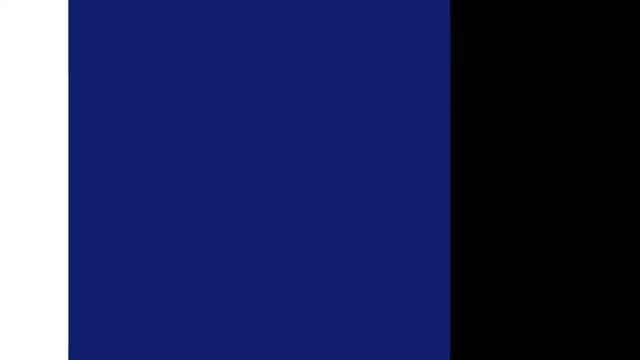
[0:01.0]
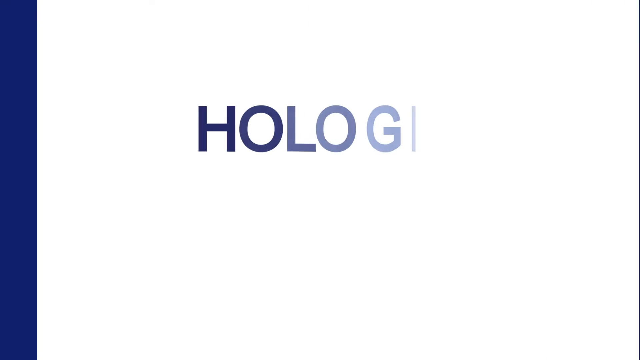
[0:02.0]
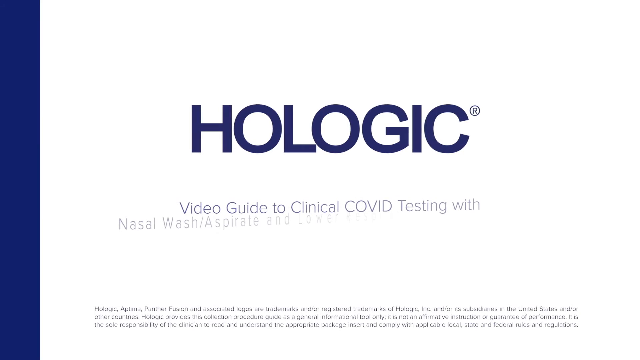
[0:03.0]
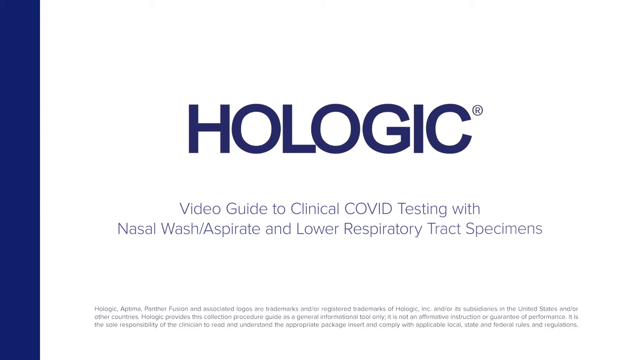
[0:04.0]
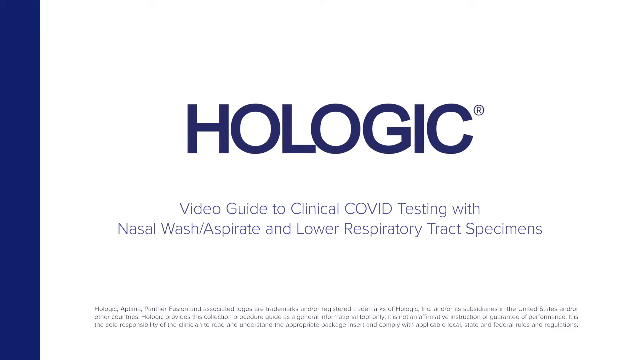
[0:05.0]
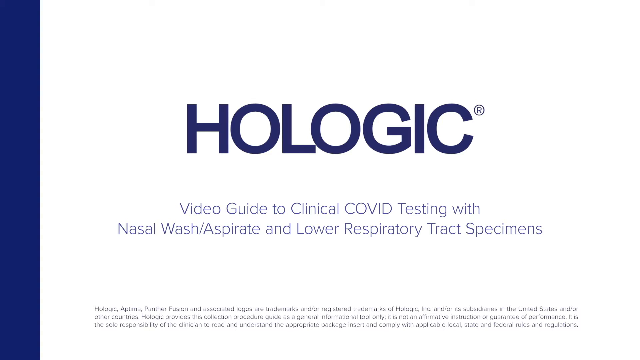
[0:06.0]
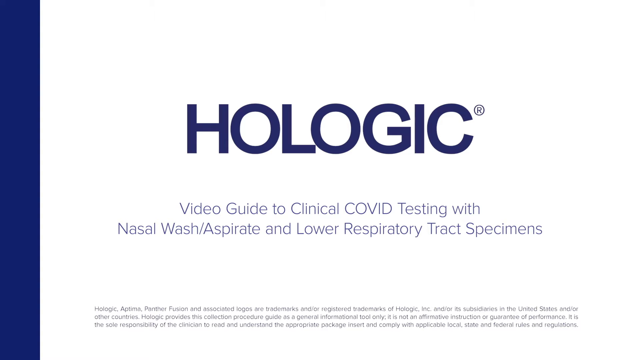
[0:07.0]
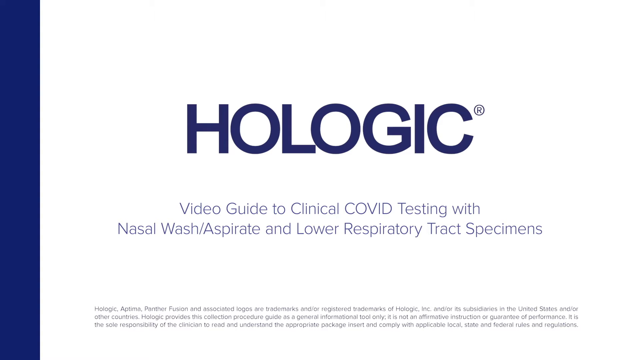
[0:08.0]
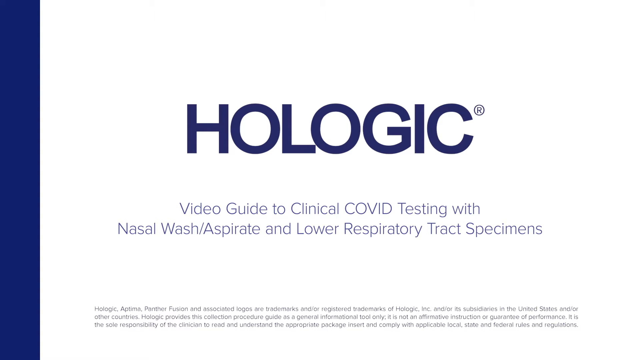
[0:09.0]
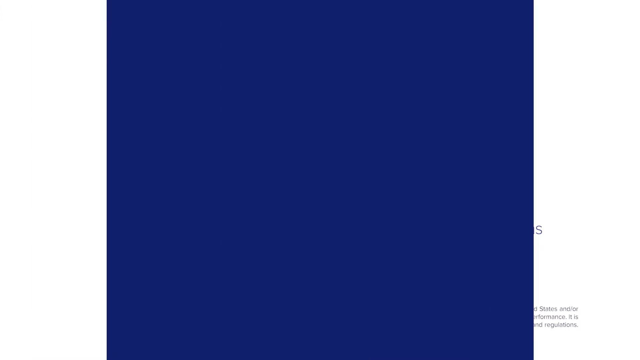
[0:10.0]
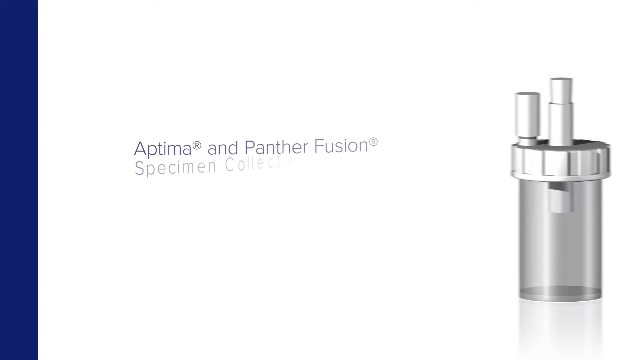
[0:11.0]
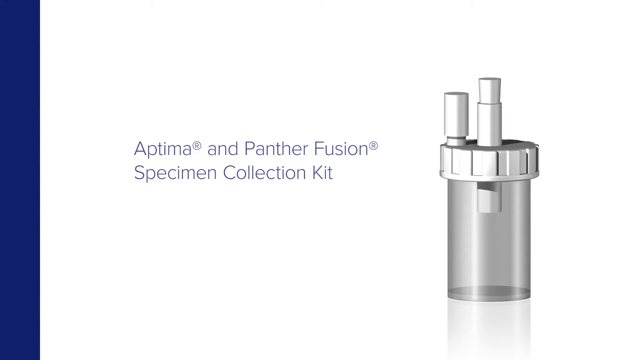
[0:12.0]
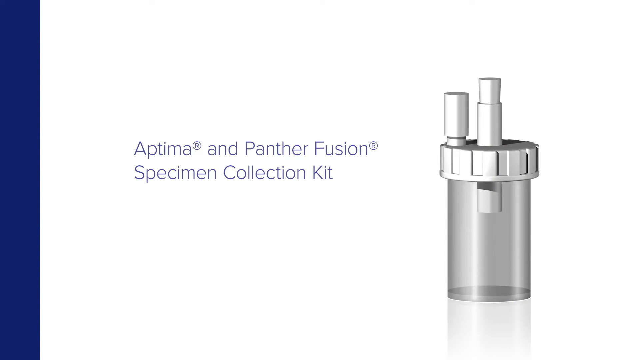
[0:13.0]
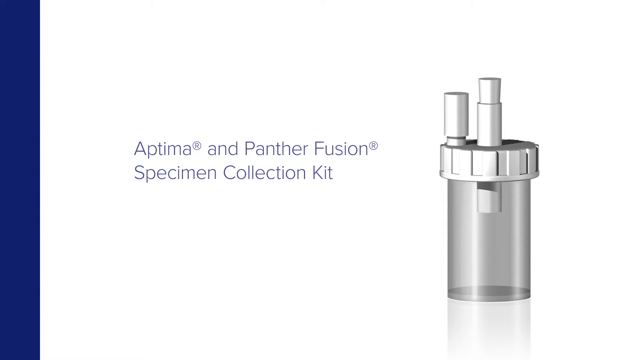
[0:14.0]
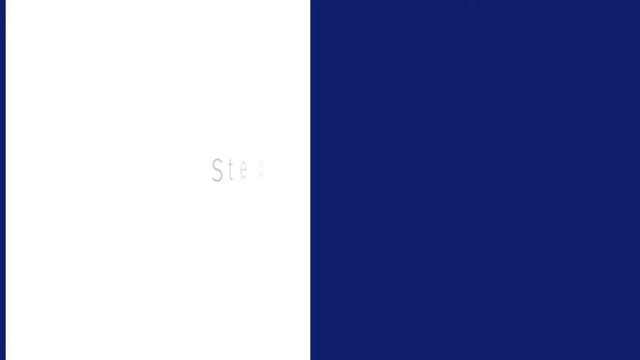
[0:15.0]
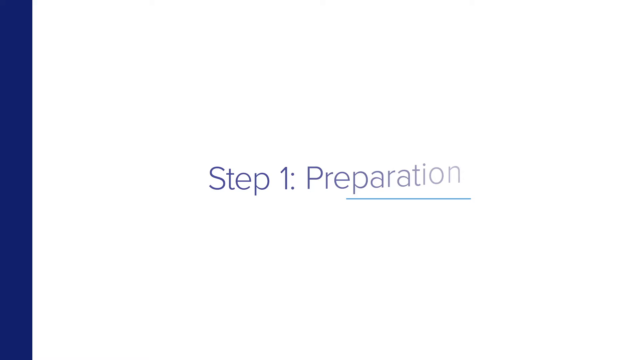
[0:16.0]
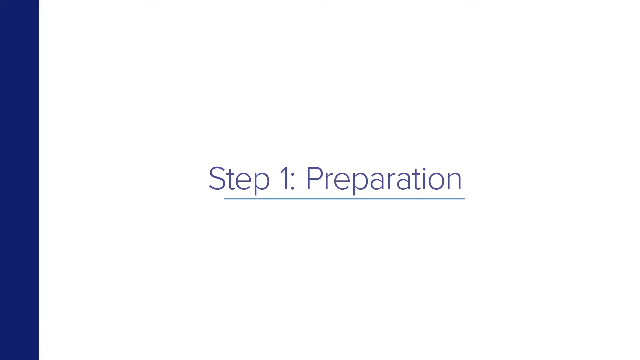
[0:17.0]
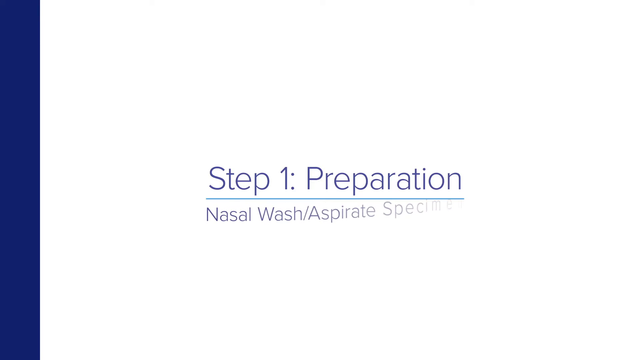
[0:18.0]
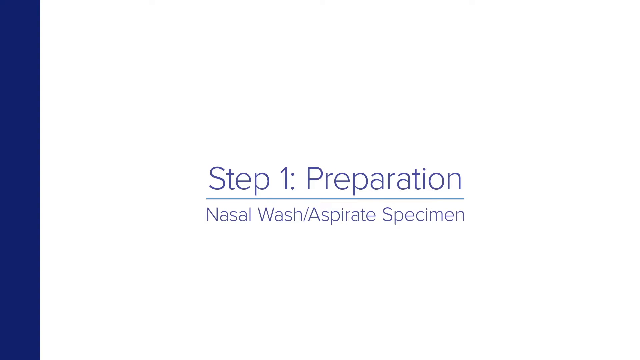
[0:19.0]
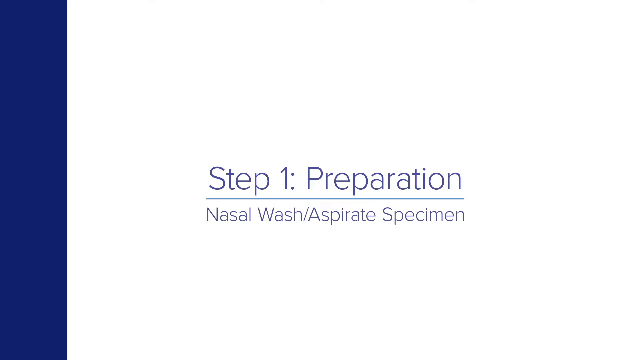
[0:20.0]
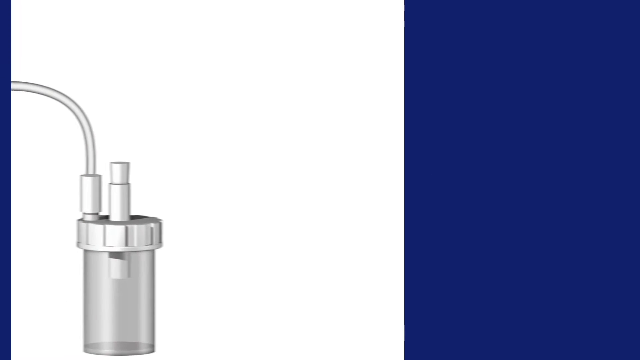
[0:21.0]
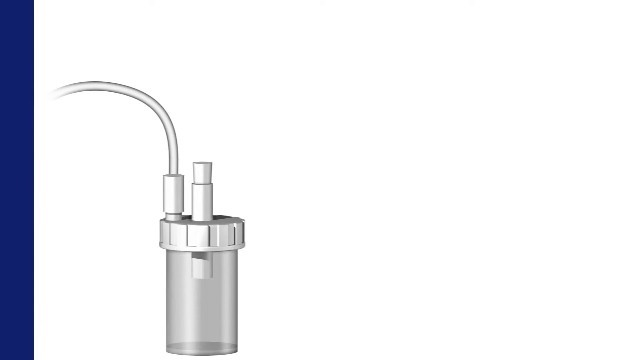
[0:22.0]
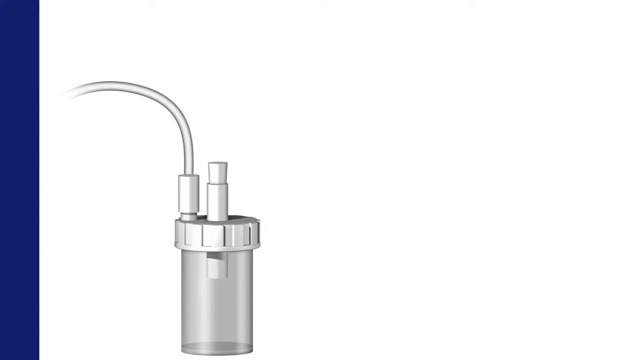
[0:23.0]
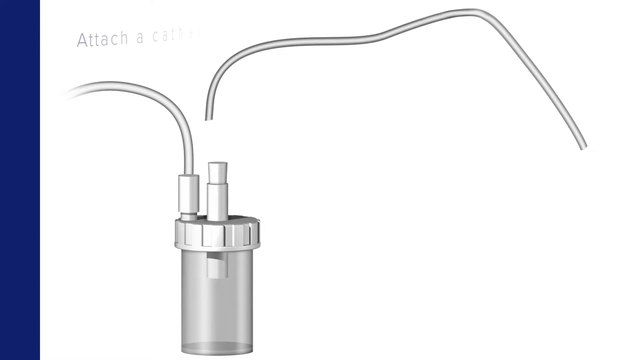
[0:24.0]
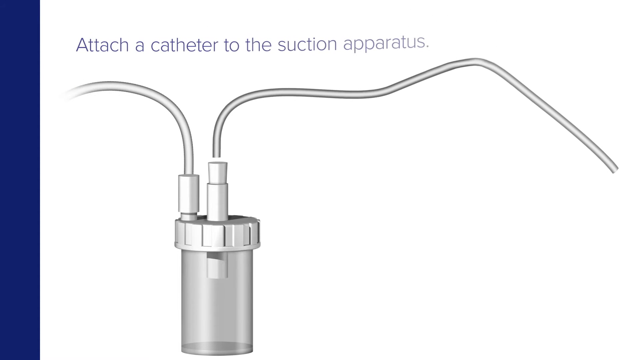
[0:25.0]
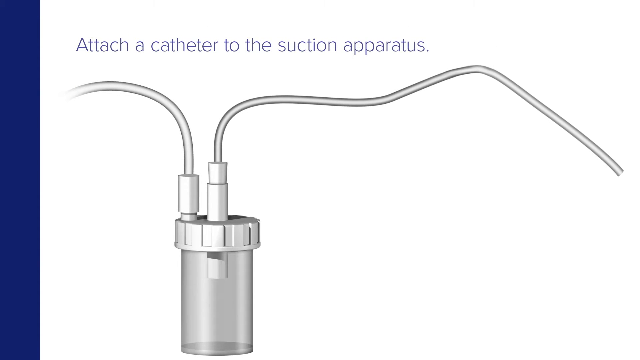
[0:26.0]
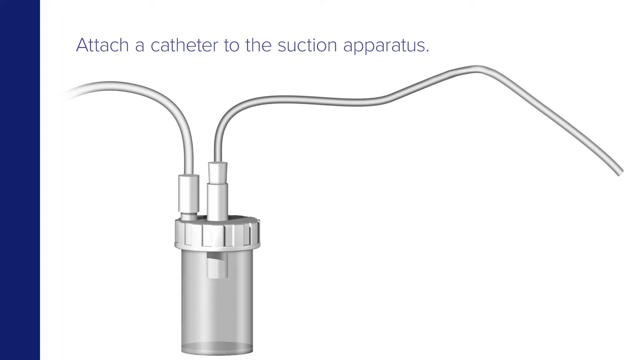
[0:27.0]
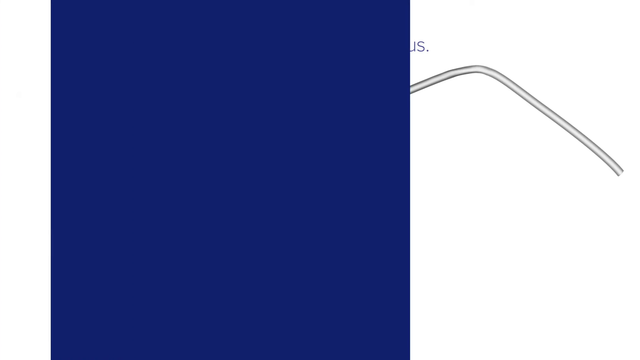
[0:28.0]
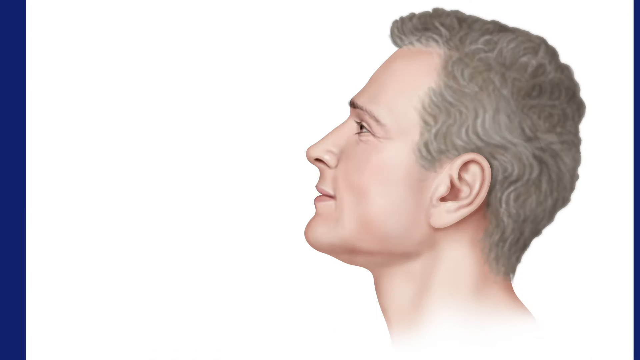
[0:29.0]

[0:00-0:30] Blue comes across the screen, leaving a white background with blue only along the left border. In dark navy capital letters the word "HOLOGIC" appears, with a small R in a circle above it marking a registered name. Underneath, in navy lettering, it says "Video Guide to Clinical COVID Testing with nasal wash/aspirate and lower respiratory tract specimens," and below that are a couple of lines of navy text too small to read. The blue moves over to the right as if clearing the screen. On the right appears a gray and white illustration of something that almost looks like an empty pharmacy pill bottle. Through the middle of its cap runs a small white tube, almost like a straw, and to the left of it is something that looks almost like the straw's cover placed on the cap. Words to the left read "APTIMA" and "PANTHER FUSION," both with registered R symbols, and a second line reads "SPECIMEN COLLECTION KIT." The navy on the left slides all the way to the right to clear the screen, and new navy words read "STEP 1 PREPARATION" with a blue line under it, followed by "NASAL WASH ASPIRATE SPECIMEN" underneath. This stays only briefly before the blue swipes across from left to right. The next slide shows the same bottle, but now the piece that looked like a cover has a tube coming out of it, and another tube comes down from above and attaches to the straw-like piece through the cap. Words at the top read "ATTACH A CATHETER TO THE SUCTION APPARATUS." The navy swipes across again, and an illustration of a man seen from the side briefly appears.